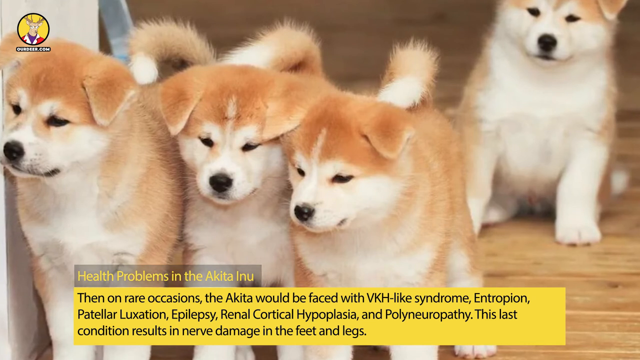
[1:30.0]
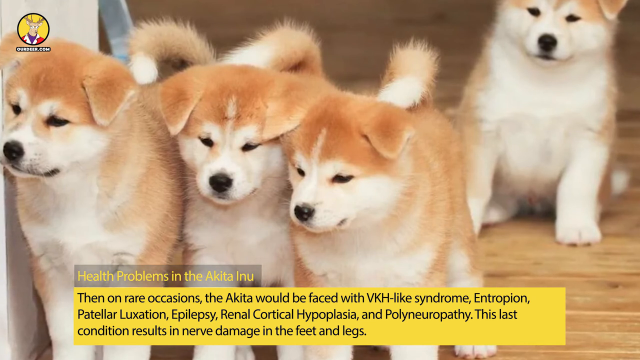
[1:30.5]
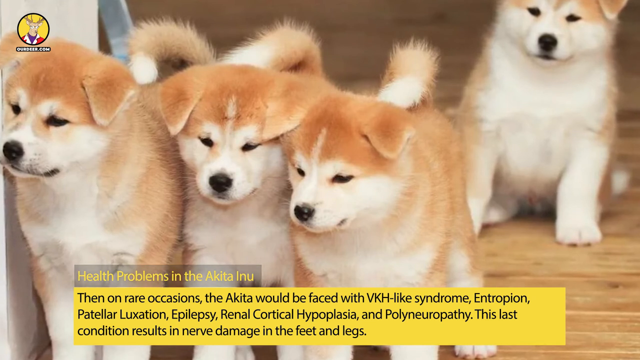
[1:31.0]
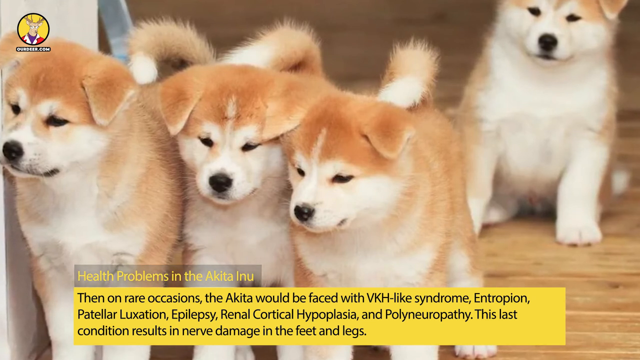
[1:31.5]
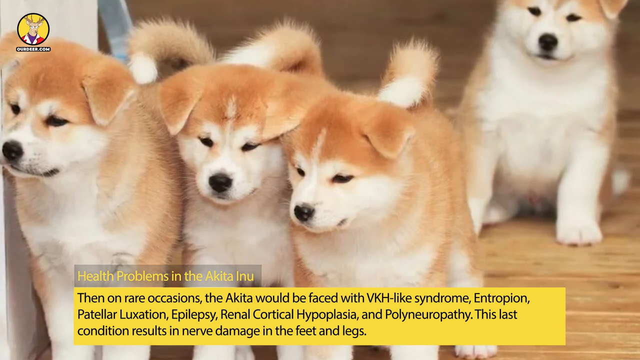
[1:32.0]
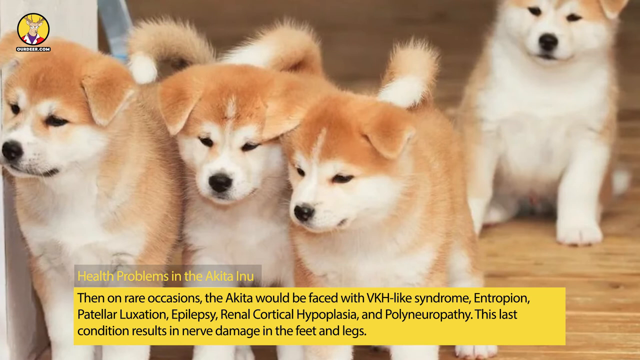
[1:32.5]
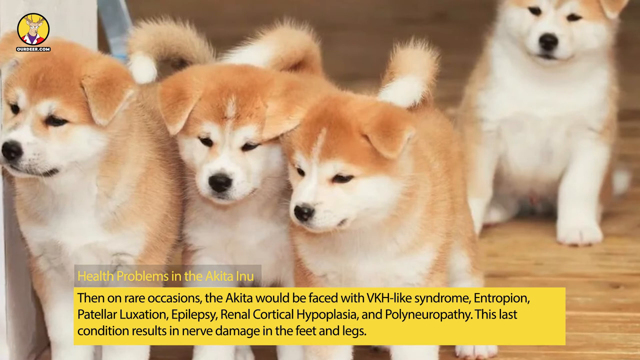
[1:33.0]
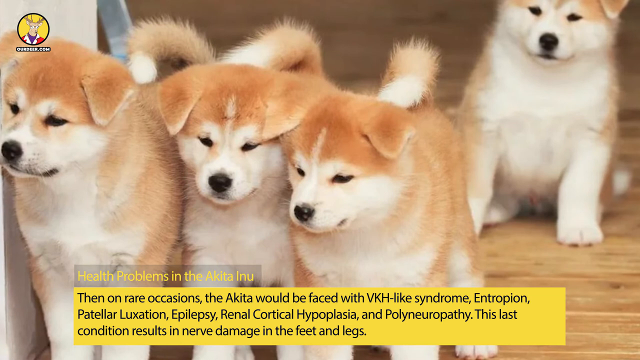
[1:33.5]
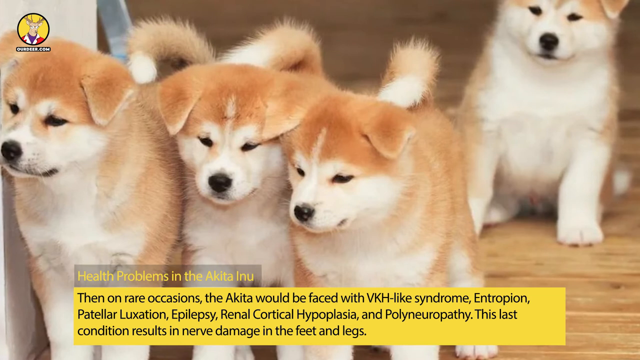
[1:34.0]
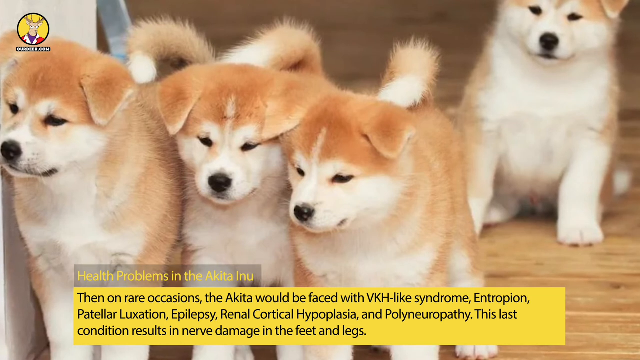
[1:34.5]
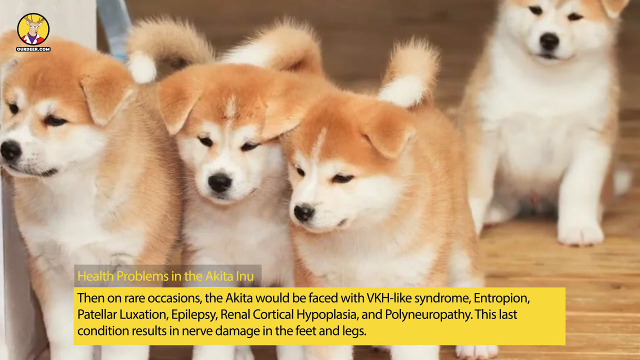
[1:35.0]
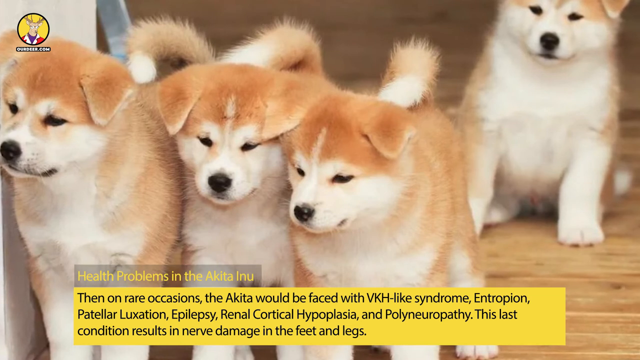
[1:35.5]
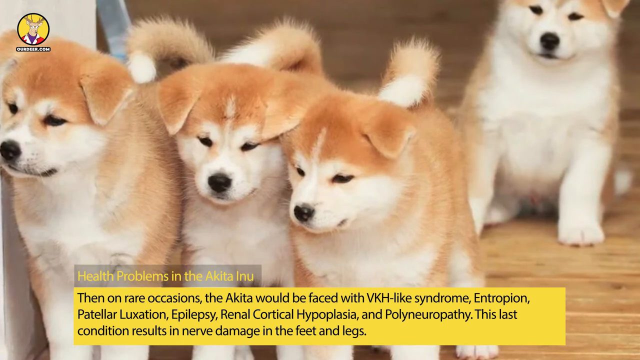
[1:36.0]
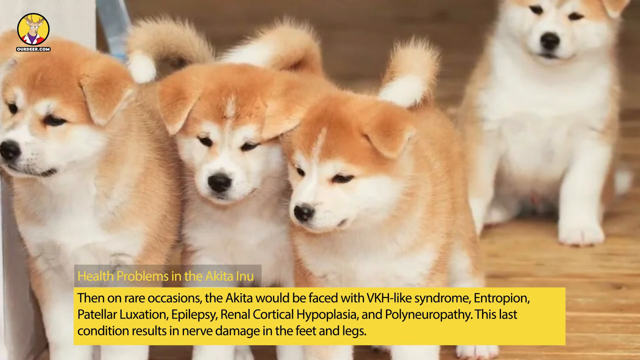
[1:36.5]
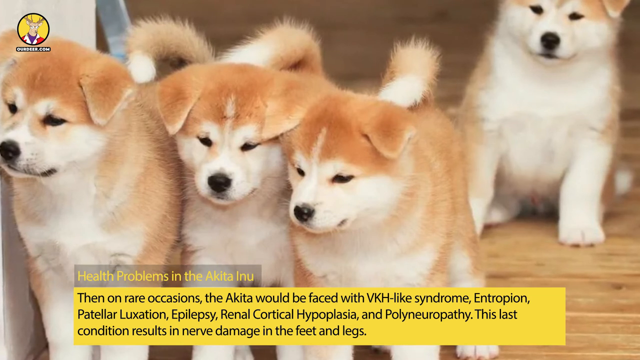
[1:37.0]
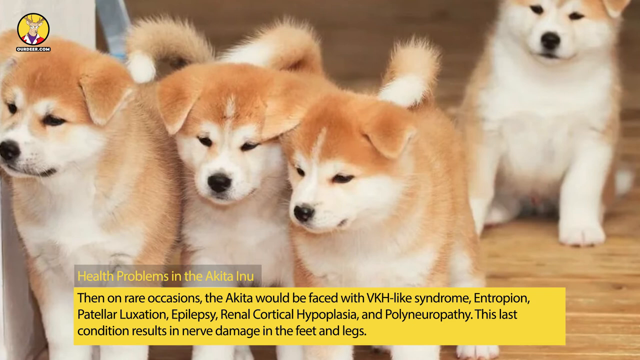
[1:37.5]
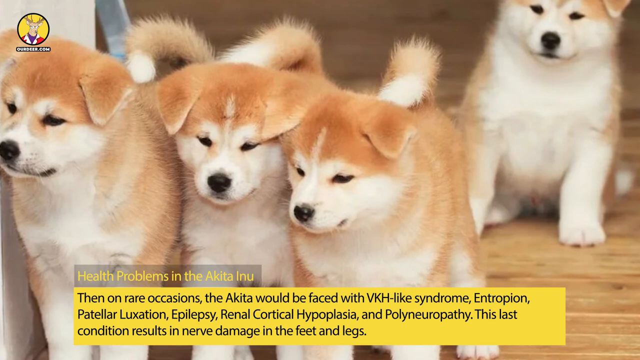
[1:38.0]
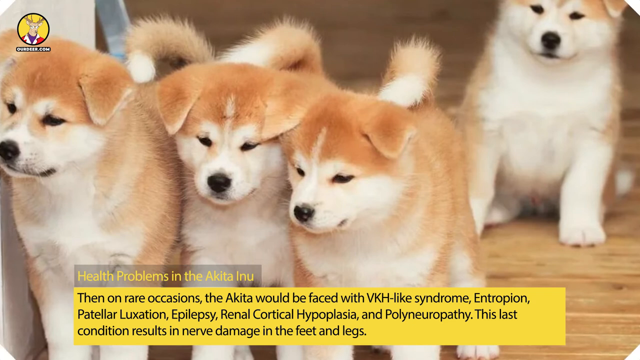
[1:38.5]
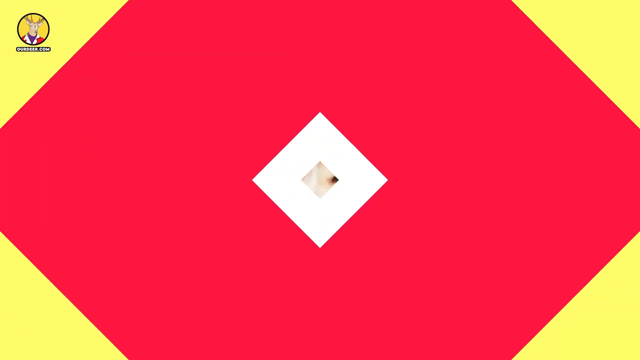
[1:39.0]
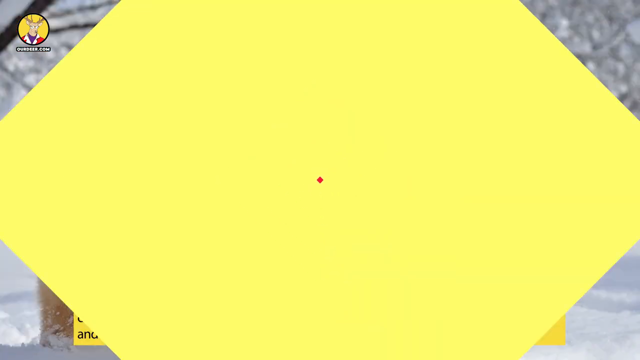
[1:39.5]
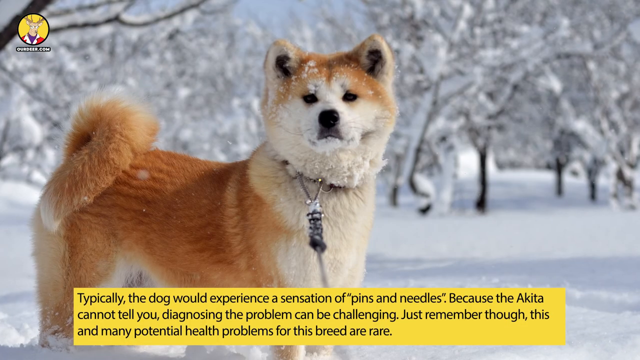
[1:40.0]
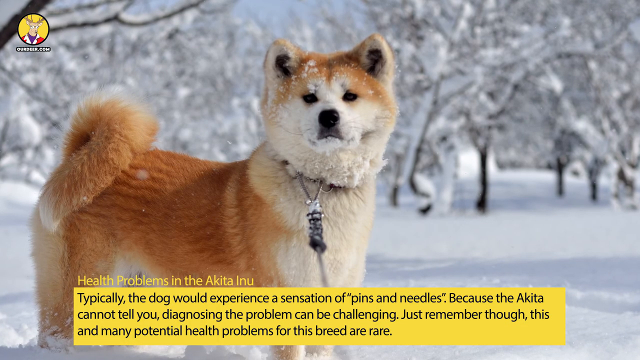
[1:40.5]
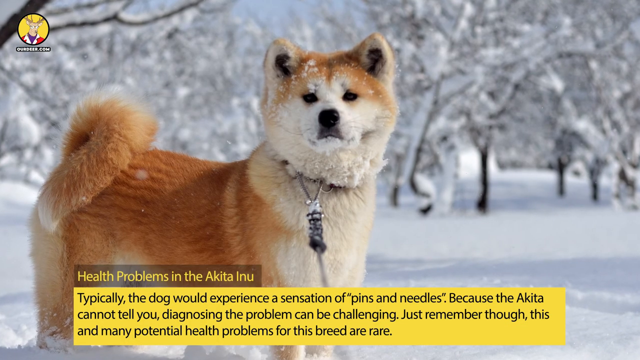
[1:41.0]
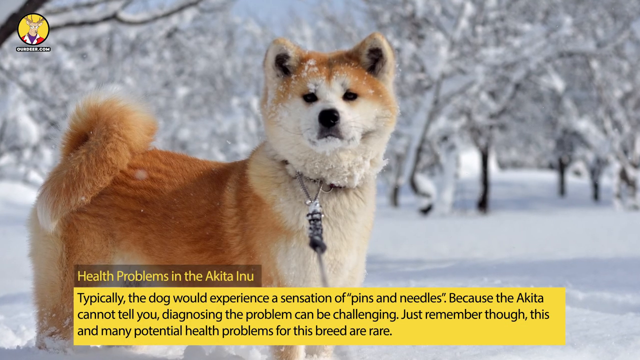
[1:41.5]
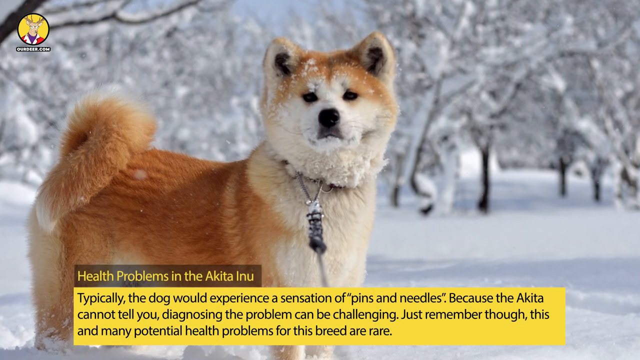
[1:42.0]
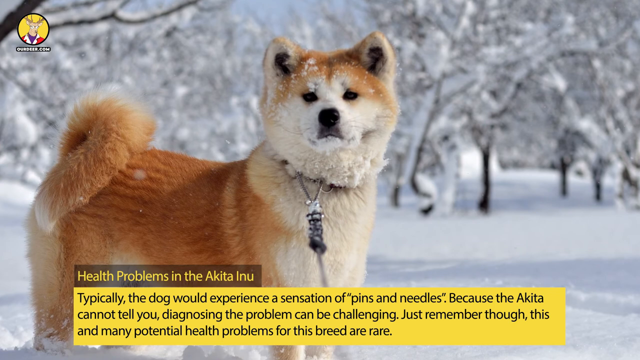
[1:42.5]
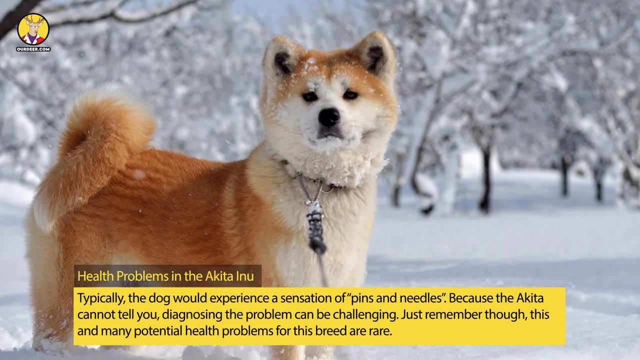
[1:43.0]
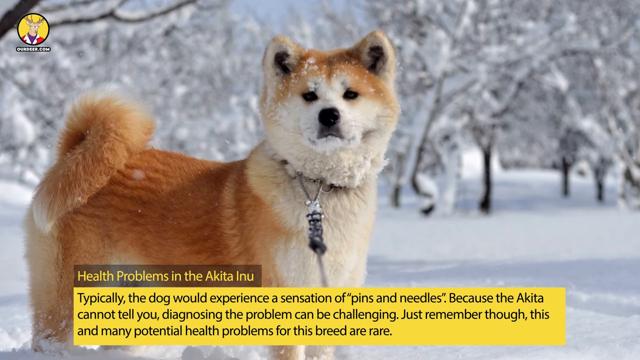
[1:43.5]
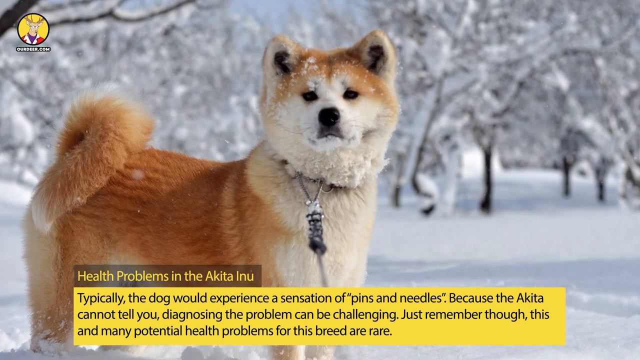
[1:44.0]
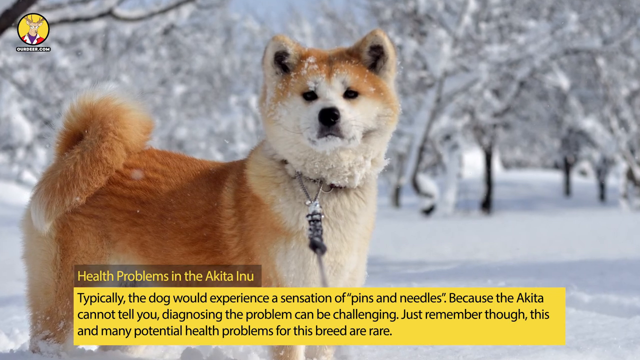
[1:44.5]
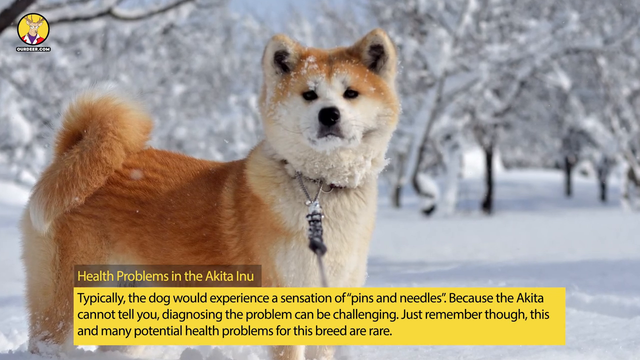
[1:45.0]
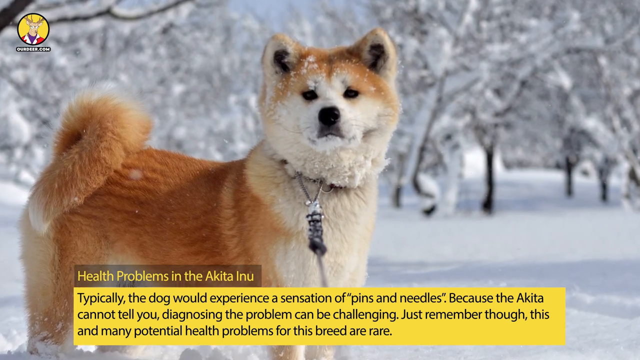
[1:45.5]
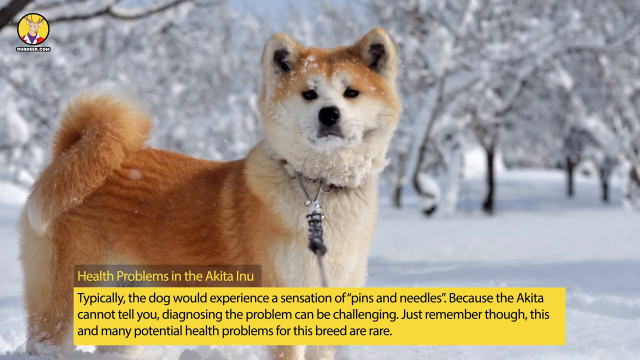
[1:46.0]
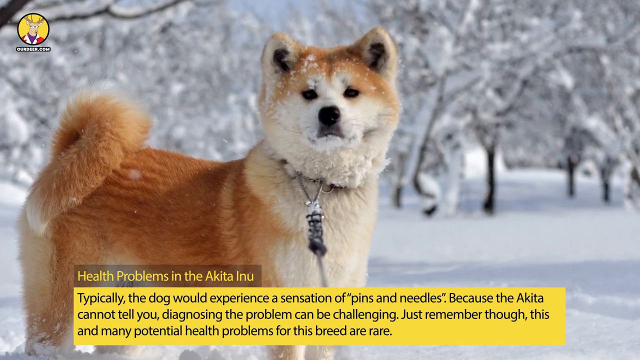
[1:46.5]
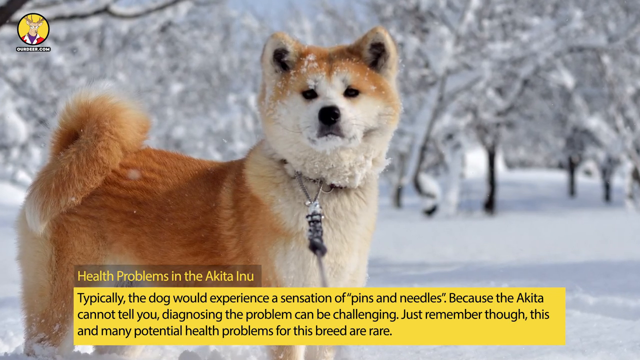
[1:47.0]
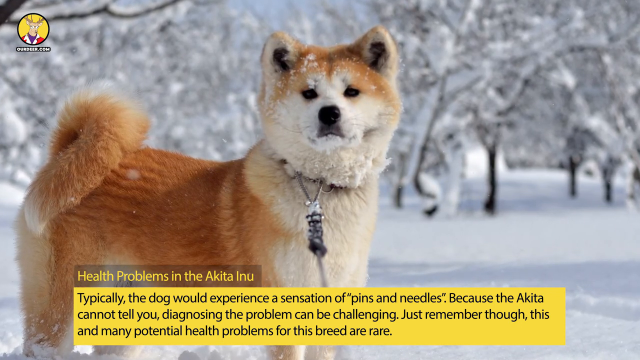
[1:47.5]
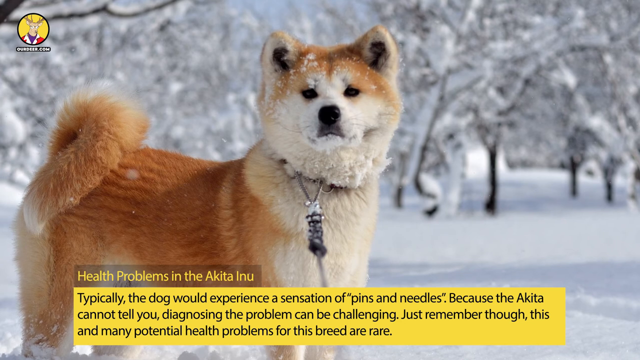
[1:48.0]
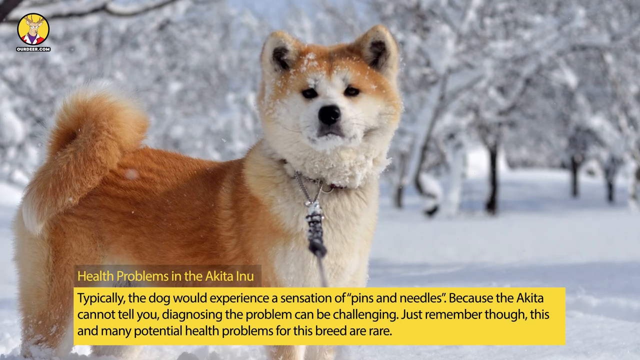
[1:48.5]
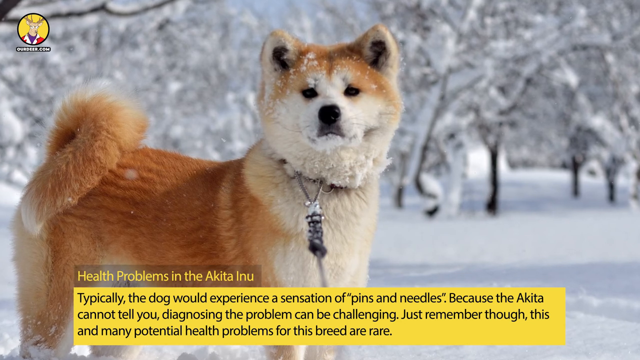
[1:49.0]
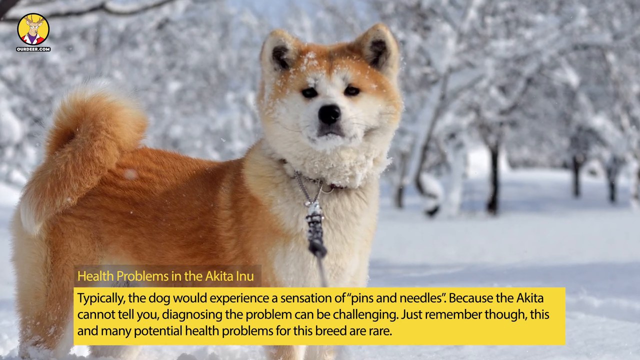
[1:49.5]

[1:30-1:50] The screen shows text about health problems in the Akita Inu, reading that on rare occasions the Akita could be faced with conditions including entropion, patellar luxation, epilepsy, renal cortical hypoplasia and polyneuropathy, and "This last condition results in nerve damage in the feet and legs." The pictures show little brown and white puppies on a hardwood floor. The screen then changes through different colors, and a big dog, a bigger version of the puppies, appears standing in the snow; he is brown and white. The text reads "typically the dog would experience a sensation of pins and needles because the Akita cannot tell you, diagnosing the problem can be challenging. Just remember though, this and many potential health problems for this breed are rare."